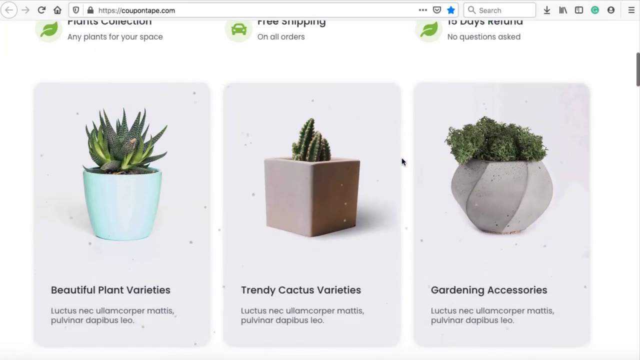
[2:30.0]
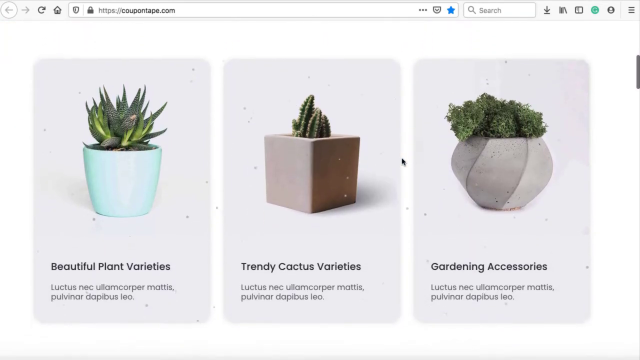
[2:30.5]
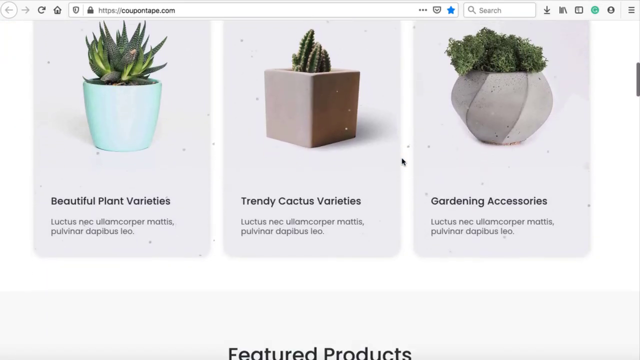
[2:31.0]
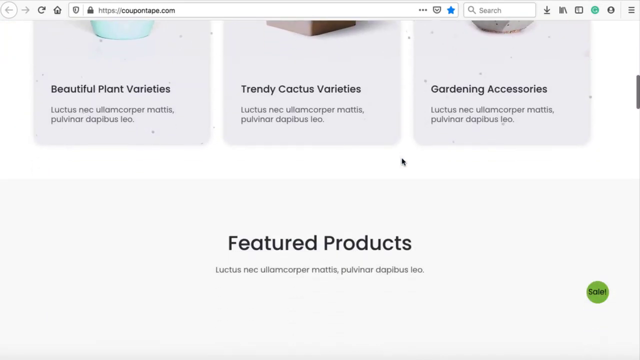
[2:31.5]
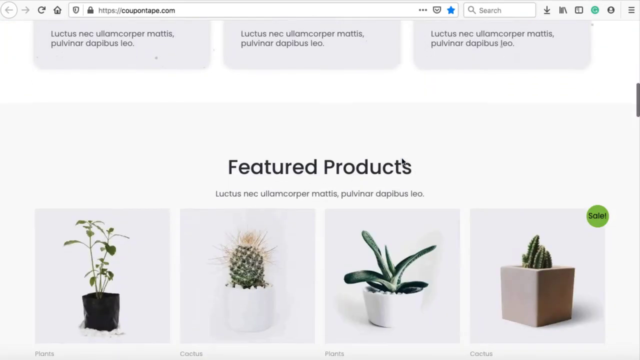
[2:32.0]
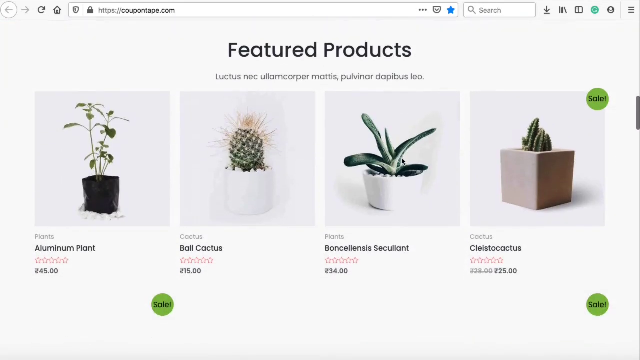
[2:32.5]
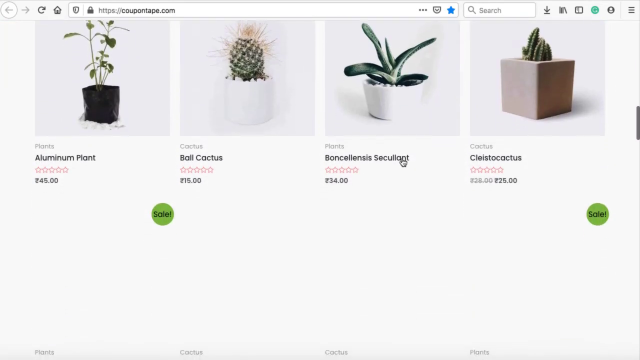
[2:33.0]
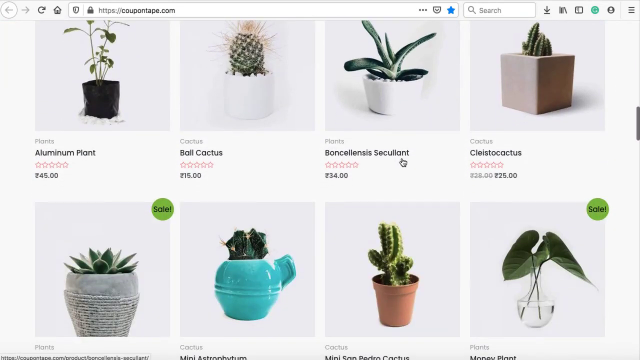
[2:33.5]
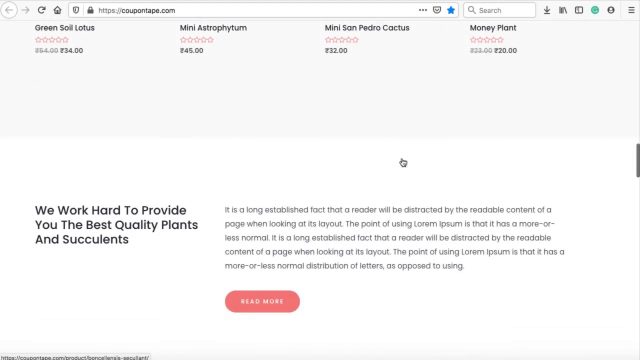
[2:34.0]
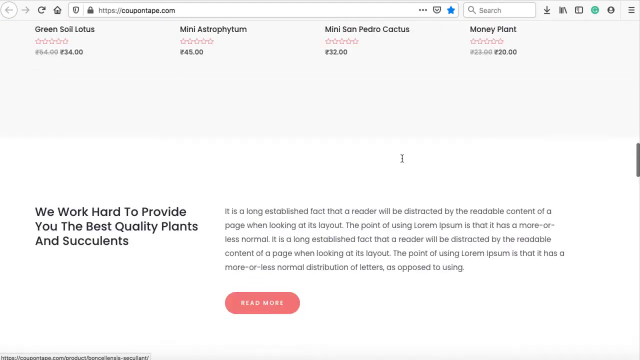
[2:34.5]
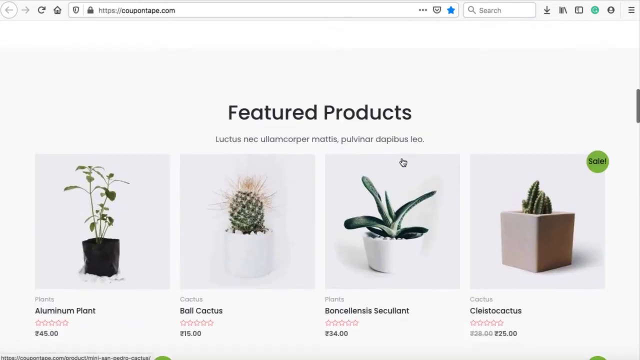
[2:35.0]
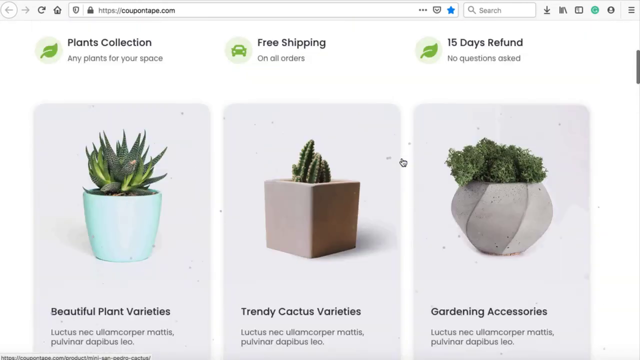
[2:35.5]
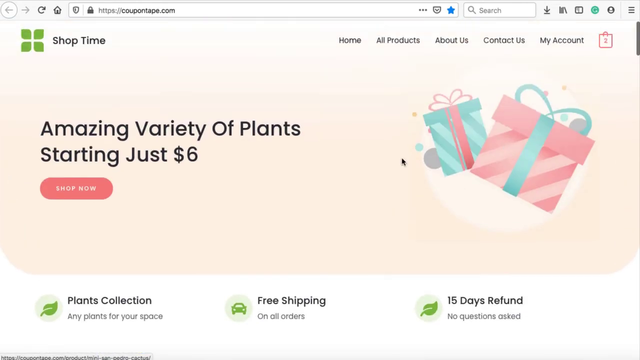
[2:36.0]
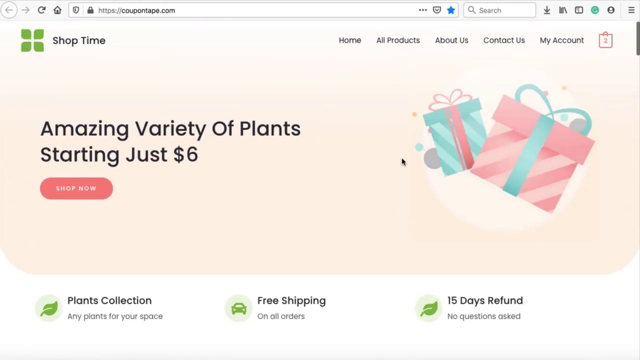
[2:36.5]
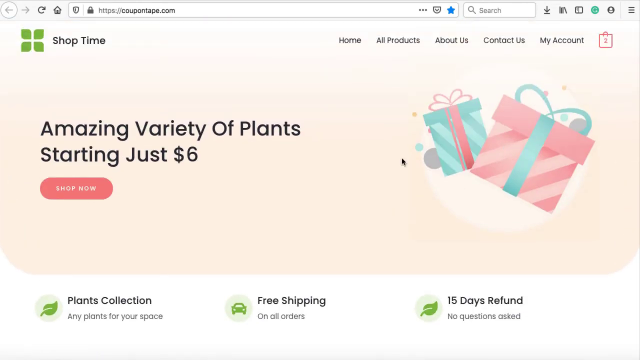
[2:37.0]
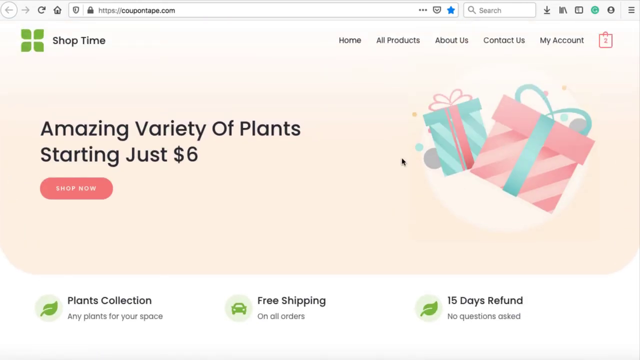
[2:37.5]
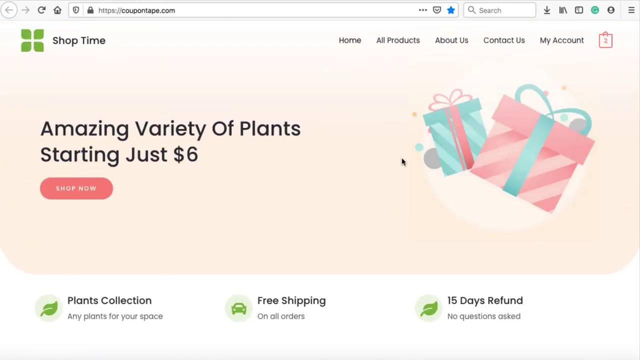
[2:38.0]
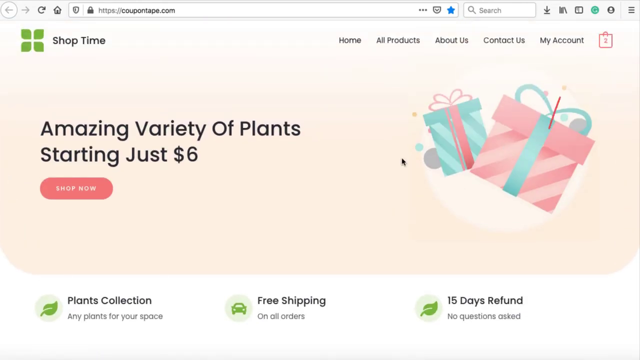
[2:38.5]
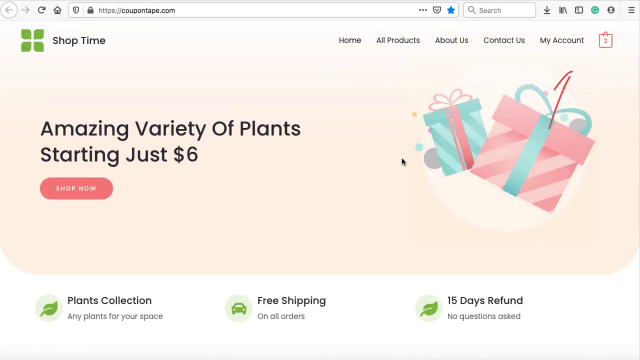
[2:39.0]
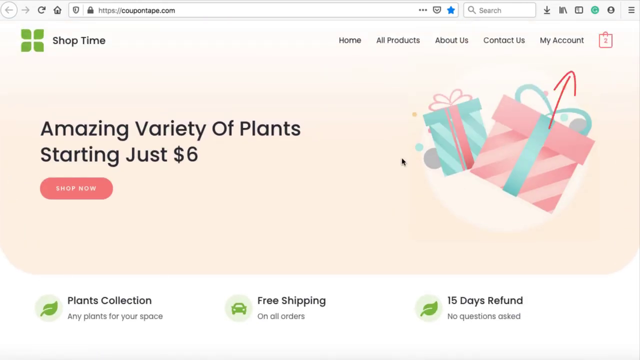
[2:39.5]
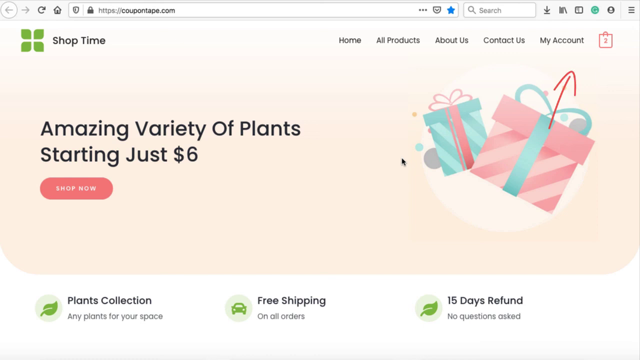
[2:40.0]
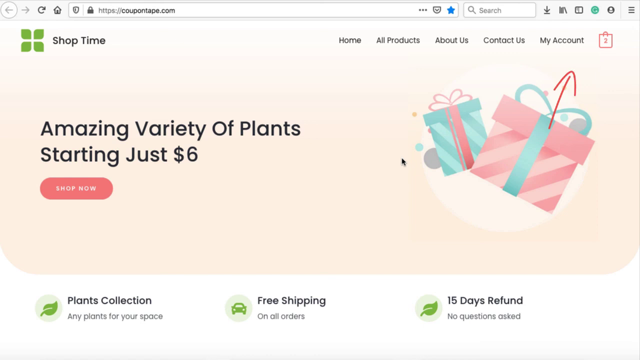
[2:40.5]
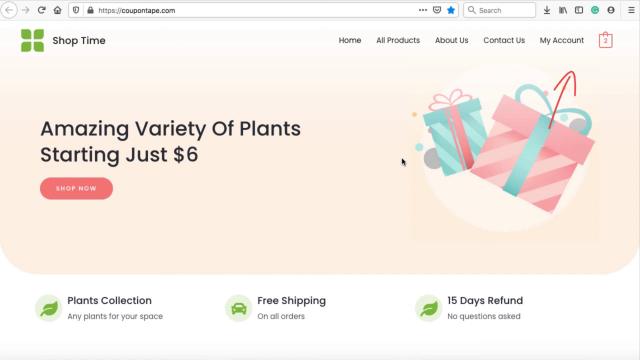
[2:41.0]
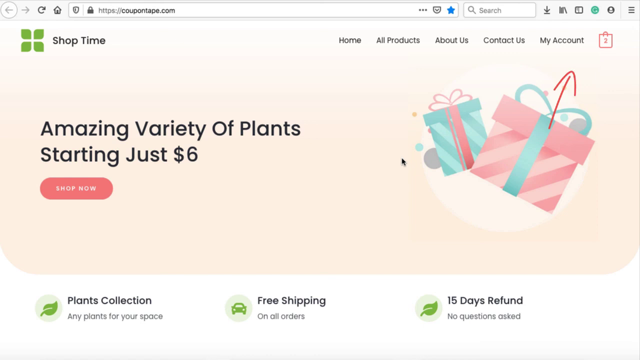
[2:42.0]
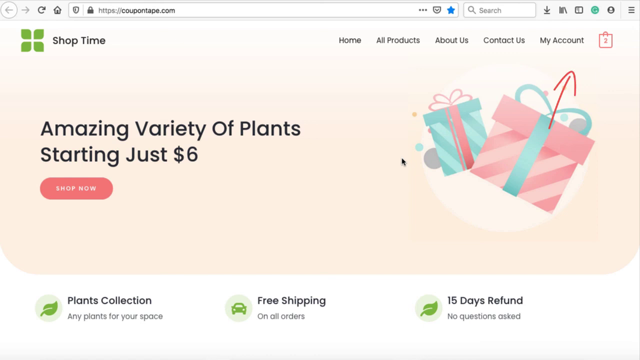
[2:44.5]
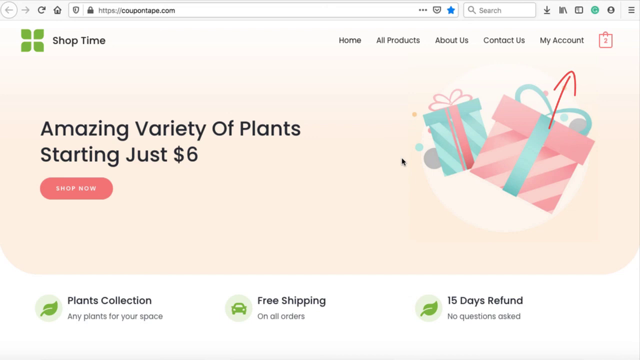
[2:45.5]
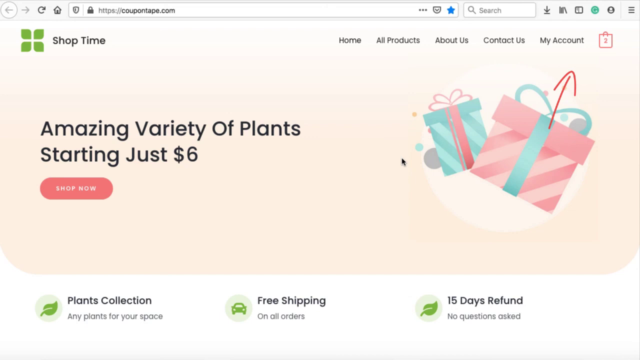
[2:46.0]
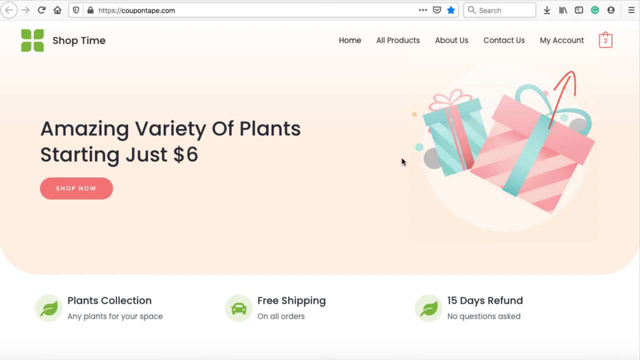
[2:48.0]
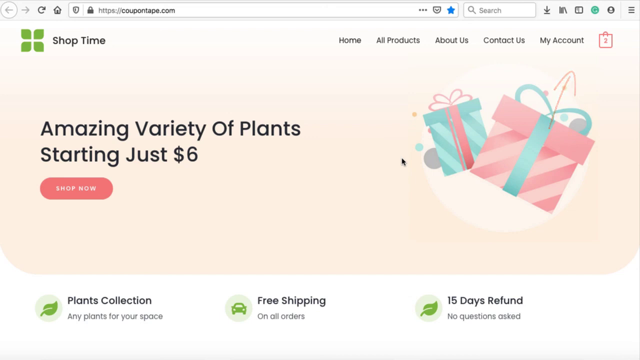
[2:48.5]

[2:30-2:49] Photographs of cacti appear on a website. The left one is in a green vase and looks somewhat like a small succulent; the one in the middle is a small cactus in a brown square vase; on the right is a roughly oval-shaped vase holding some kind of herb or plants. The person has scrolled down to three sections with black headers reading "beautiful plant varieties," "trendy cactus varieties," and "gardening accessories," with filler text underneath. Scrolling further shows the header "featured products" with four products: an aluminum plant, a ball cactus, some kind of succulent, and another type of cactus. Some of the boxes have a green circle in the top right corner that says "sale" in black text. The person scrolls down as more plants load, then scrolls back up to the top of the page, where headers read home, all products, about us, contact us, and my account, with a red bag icon containing the number two. In the top left corner, "shop time" appears in black text with a logo that looks like four green leaves, and "amazing variety of plants, starting just $6" is in the center of the page next to a digital illustration of a couple of gifts.